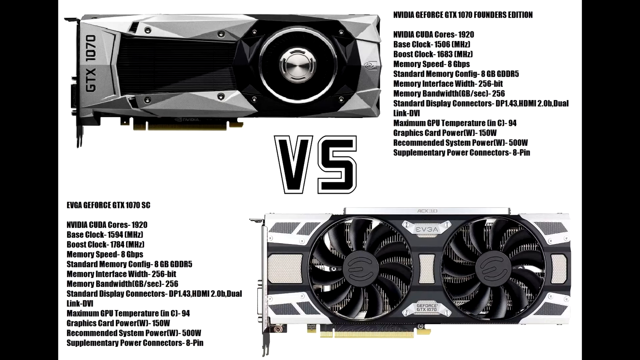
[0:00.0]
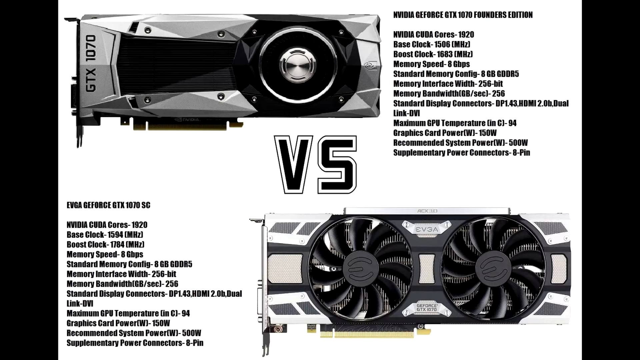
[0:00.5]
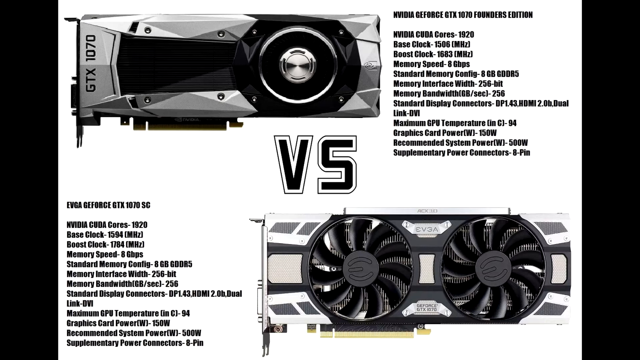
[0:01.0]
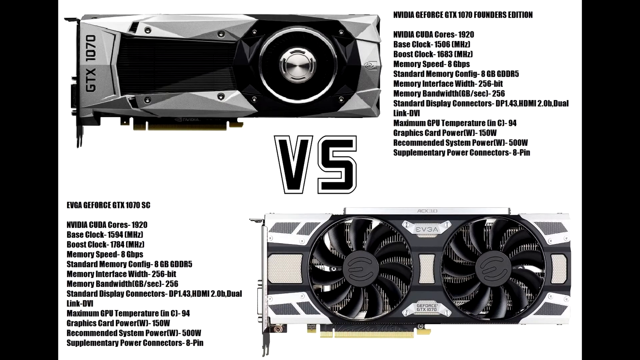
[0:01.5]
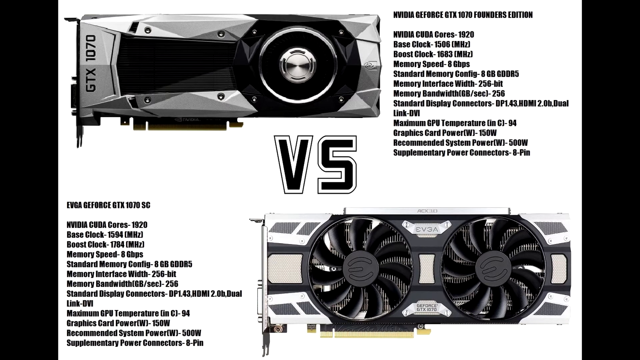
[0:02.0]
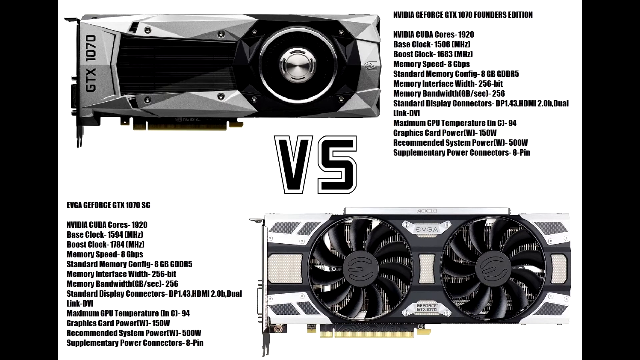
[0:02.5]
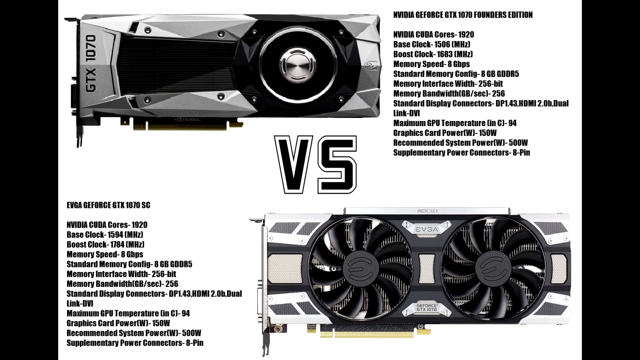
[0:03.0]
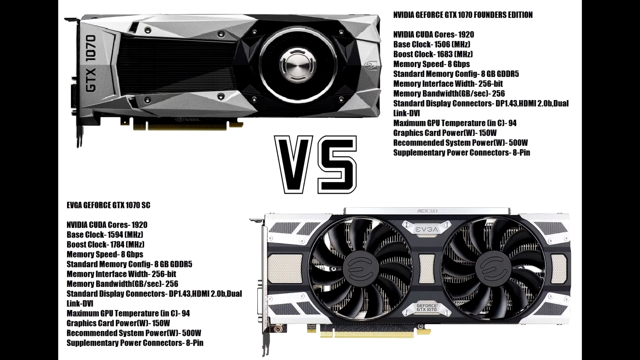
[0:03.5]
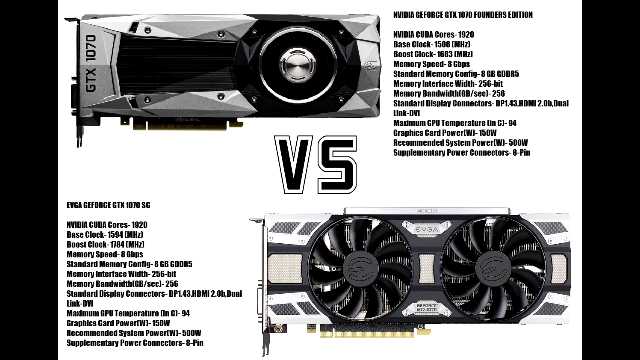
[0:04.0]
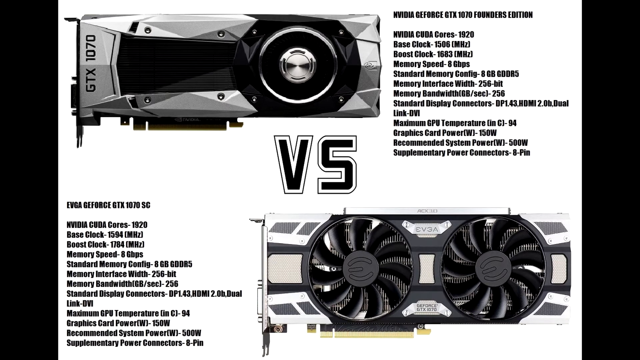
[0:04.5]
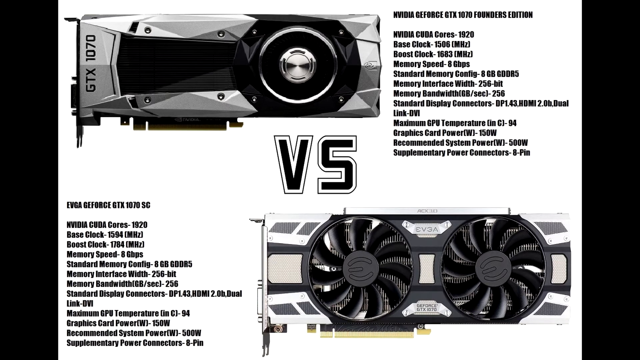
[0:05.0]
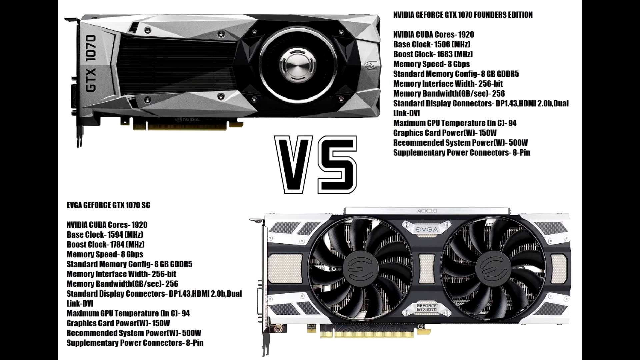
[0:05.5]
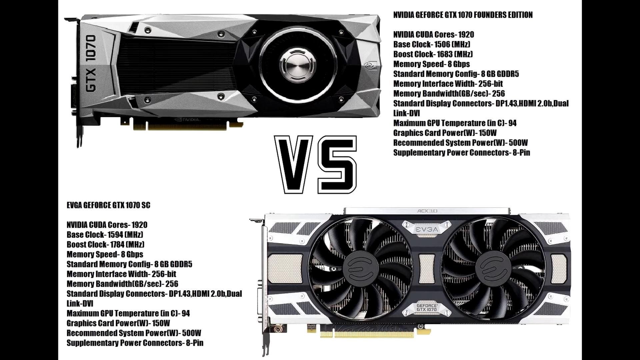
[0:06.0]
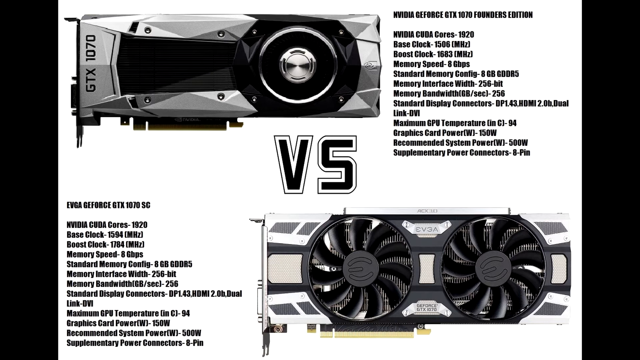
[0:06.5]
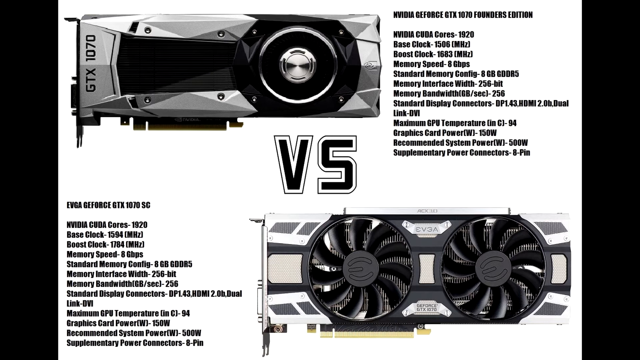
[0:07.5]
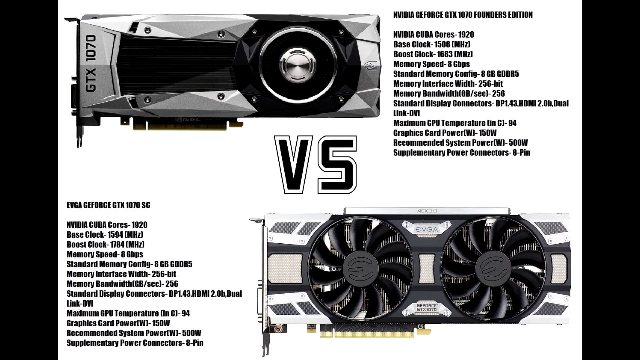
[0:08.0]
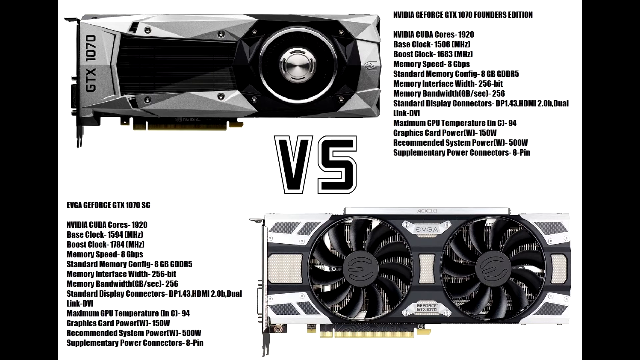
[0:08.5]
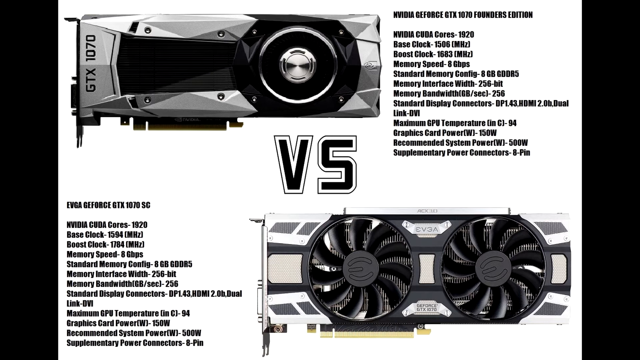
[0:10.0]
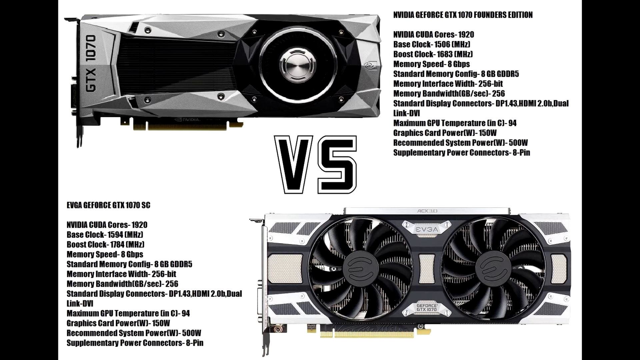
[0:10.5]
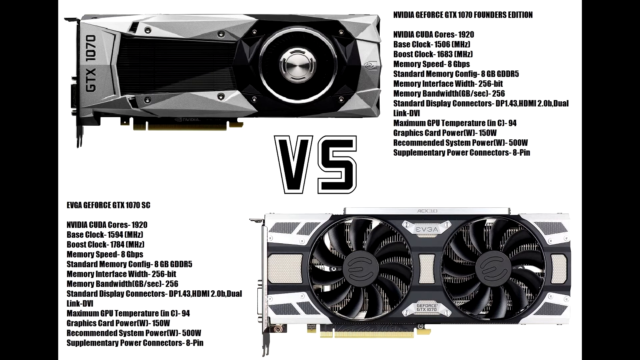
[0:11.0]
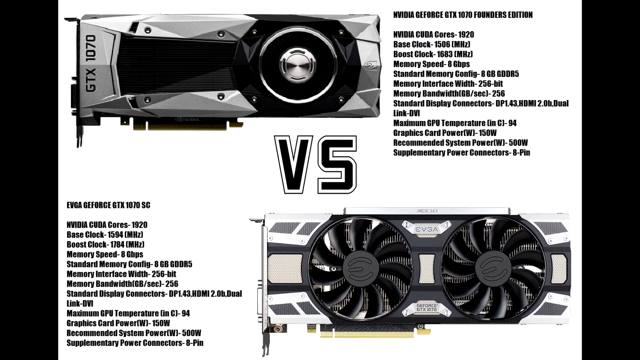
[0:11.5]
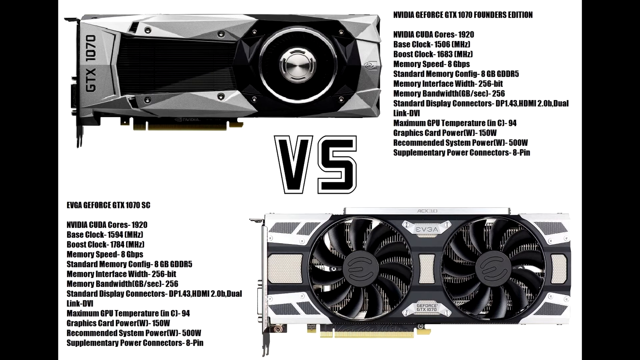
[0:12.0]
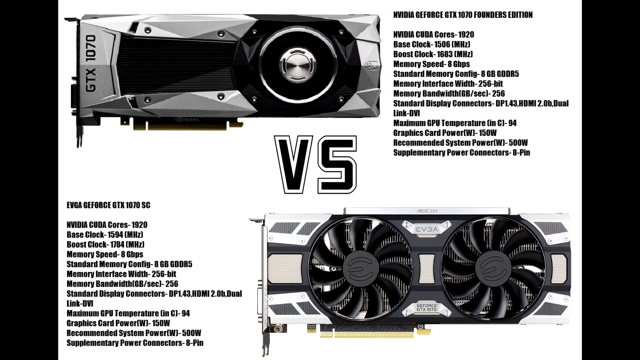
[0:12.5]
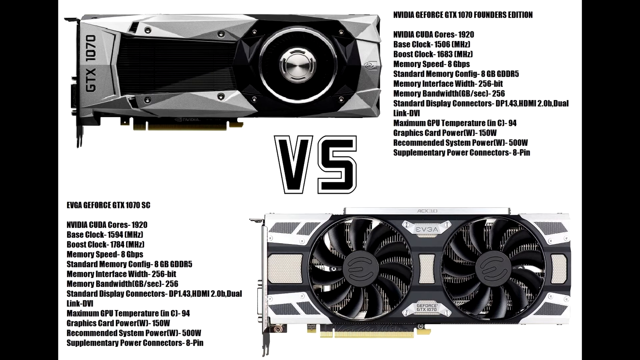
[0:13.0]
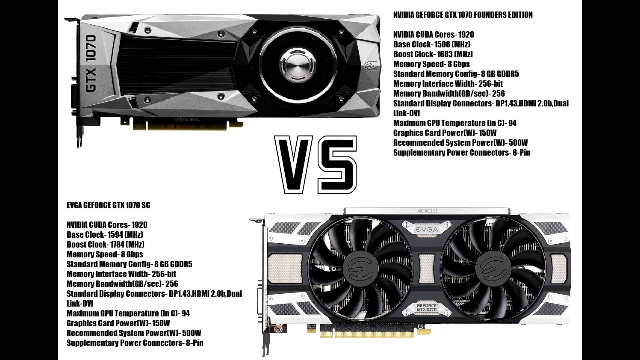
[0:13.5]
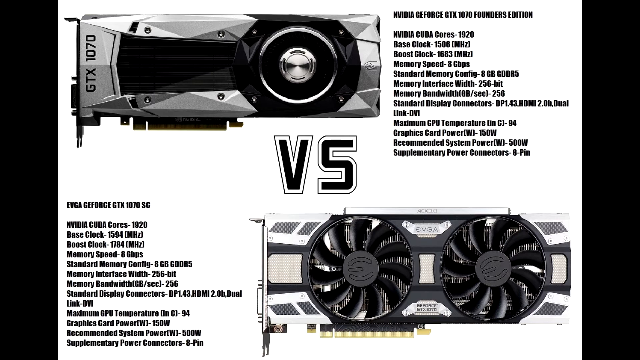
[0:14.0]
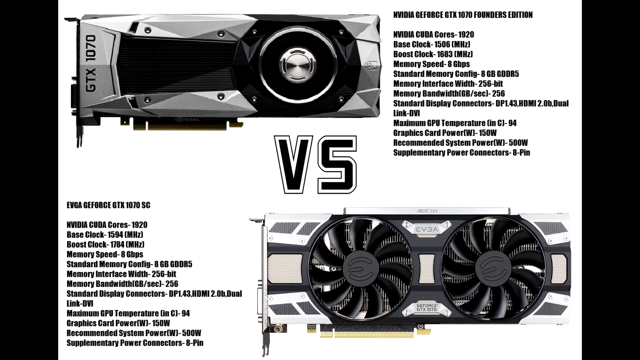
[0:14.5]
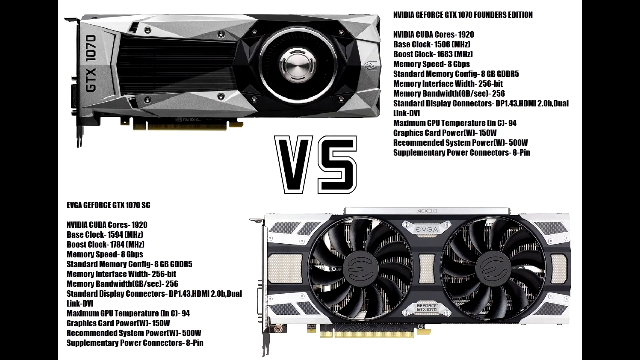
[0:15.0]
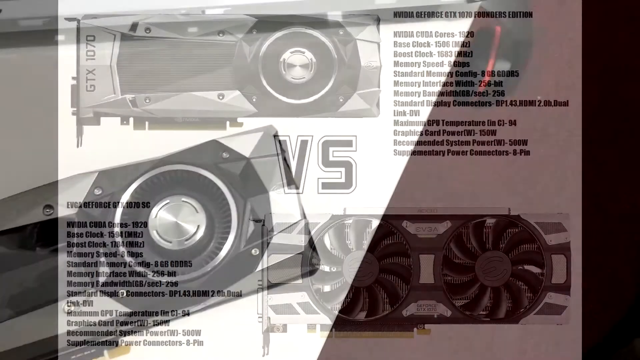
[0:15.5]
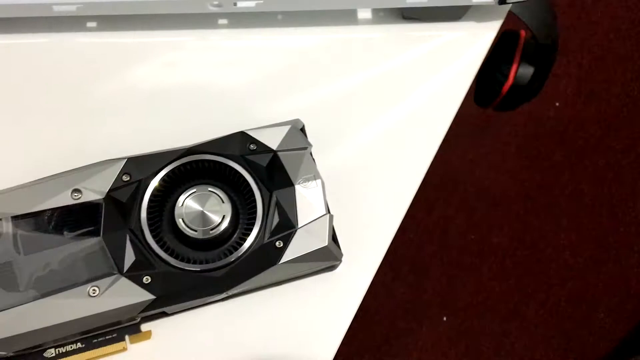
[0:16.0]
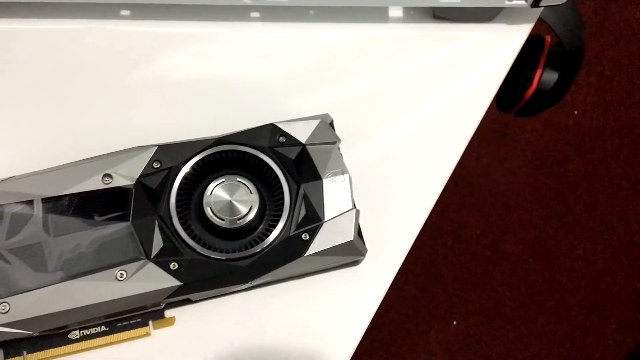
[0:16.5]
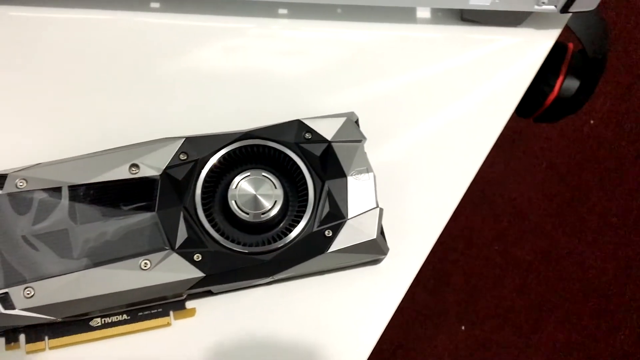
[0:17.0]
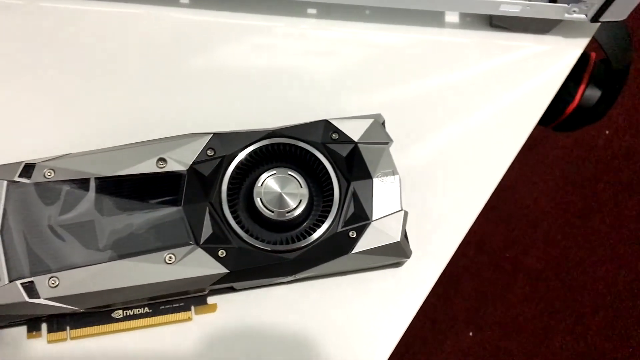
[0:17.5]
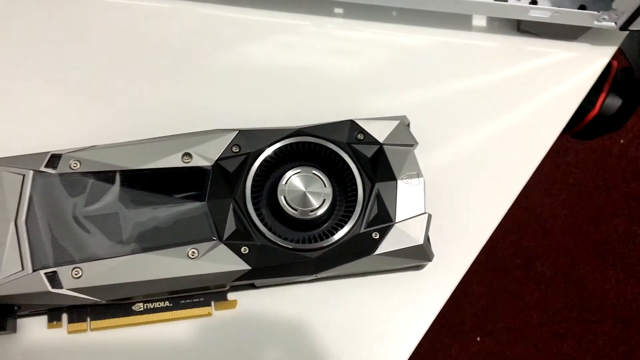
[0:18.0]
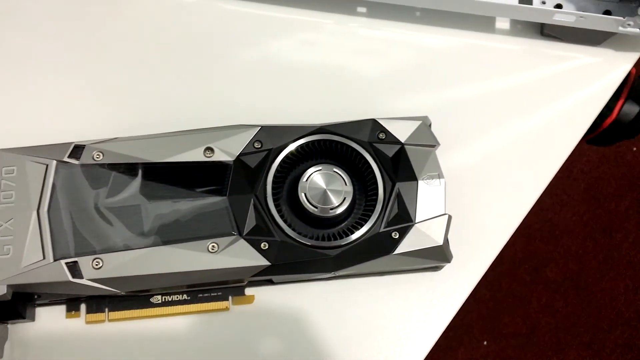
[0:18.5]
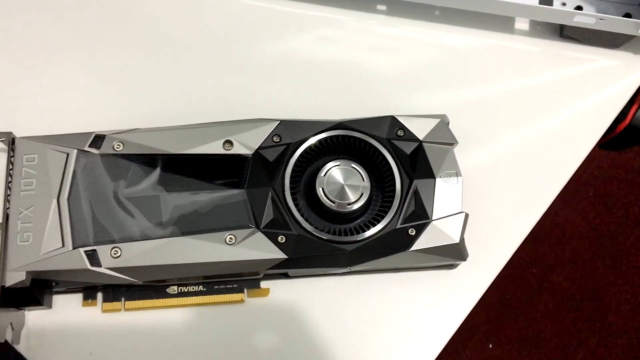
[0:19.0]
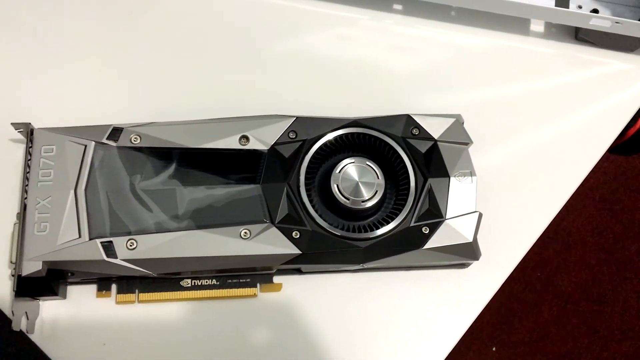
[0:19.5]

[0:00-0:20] The video opens on what is a chart comparing the NVIDIA GeForce GTX 1070 Founders Edition with the EVGA GeForce GTX 1070 SC. It shows the NVIDIA brand and CUDA Cores 1920, and underneath is information detailing the specs of the video card, including a 256-bit memory interface. The video then transitions to the video card itself lying on a desk, apparently belonging to the person reviewing it. It is a standard-looking NVIDIA video card, model GTX 1070.